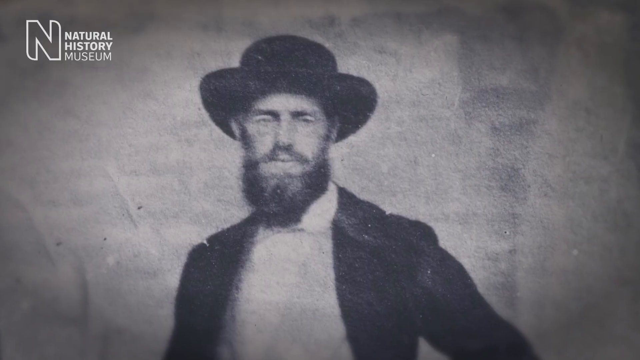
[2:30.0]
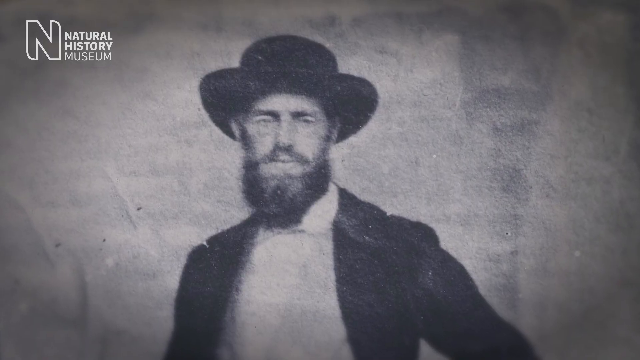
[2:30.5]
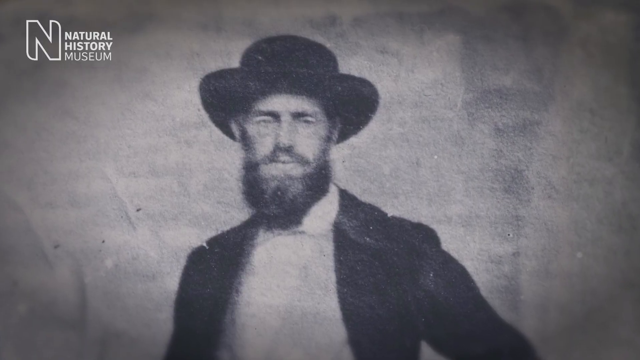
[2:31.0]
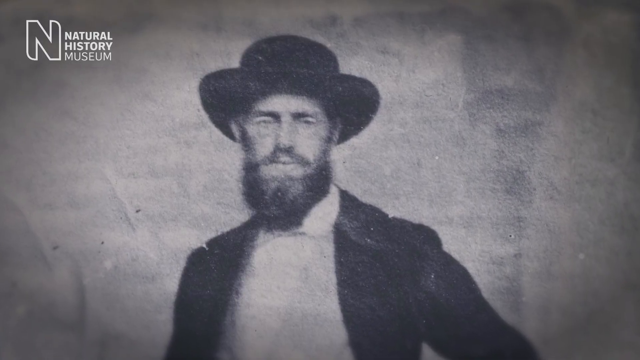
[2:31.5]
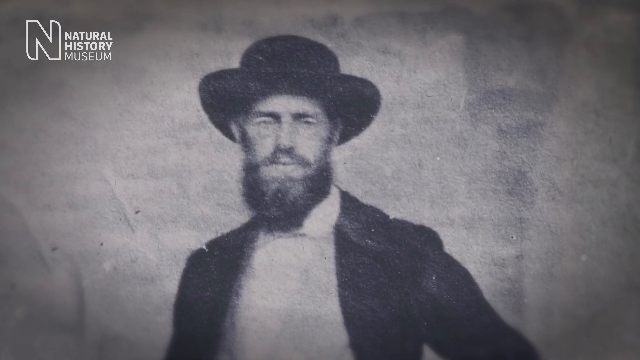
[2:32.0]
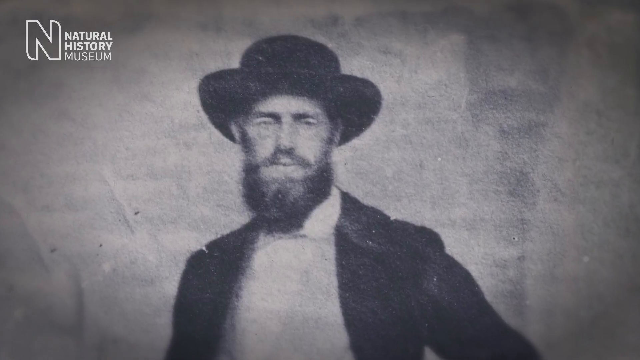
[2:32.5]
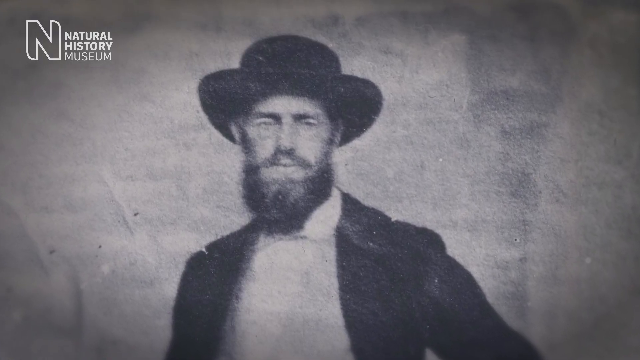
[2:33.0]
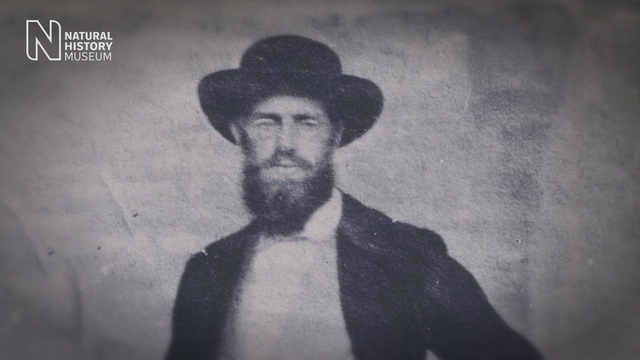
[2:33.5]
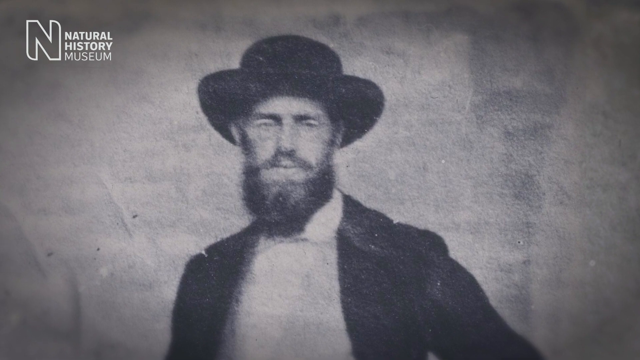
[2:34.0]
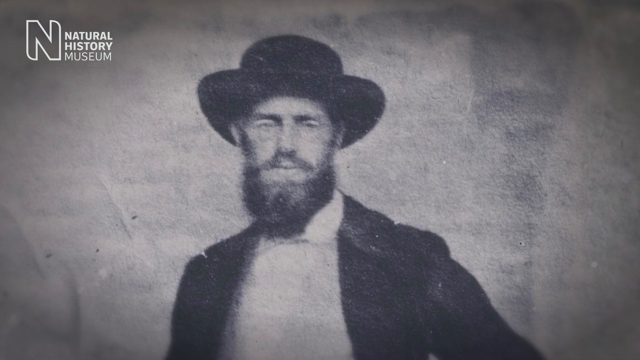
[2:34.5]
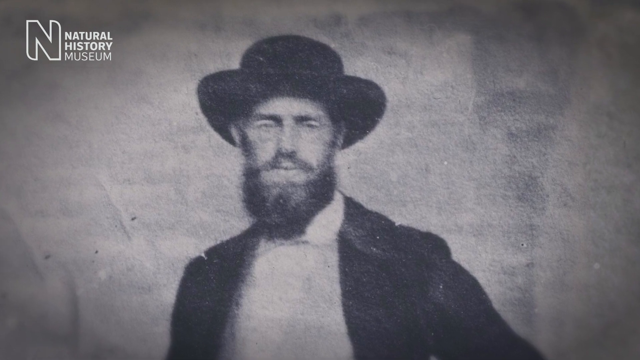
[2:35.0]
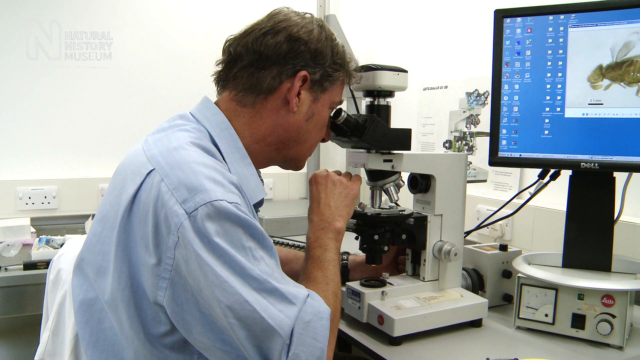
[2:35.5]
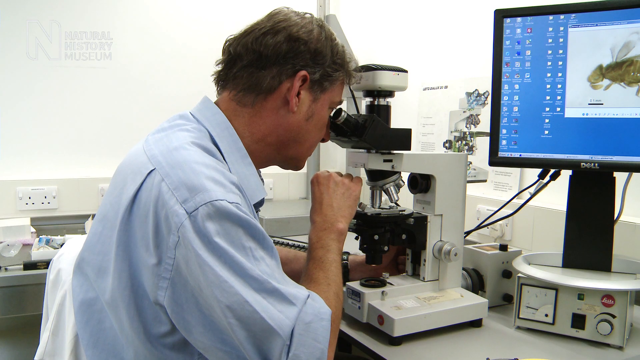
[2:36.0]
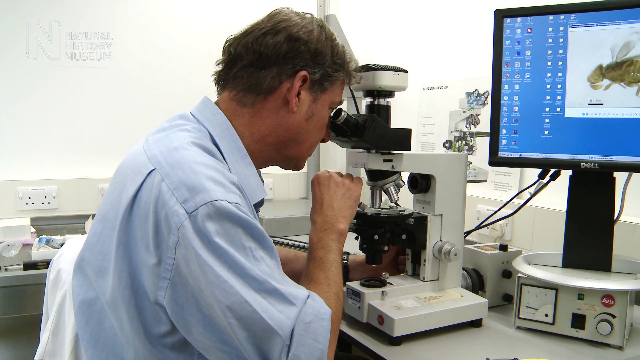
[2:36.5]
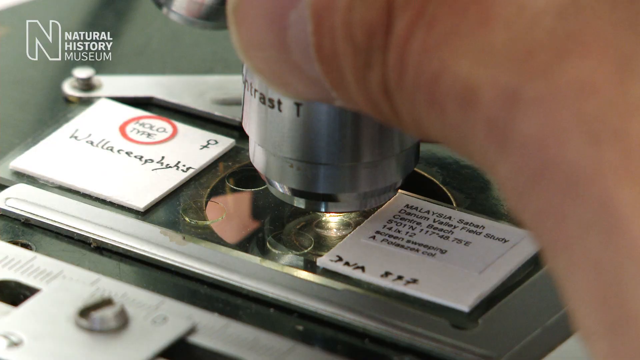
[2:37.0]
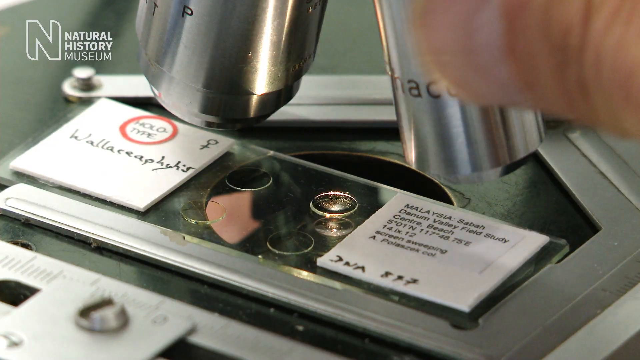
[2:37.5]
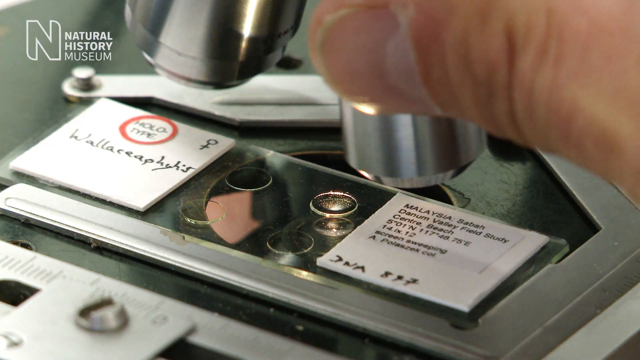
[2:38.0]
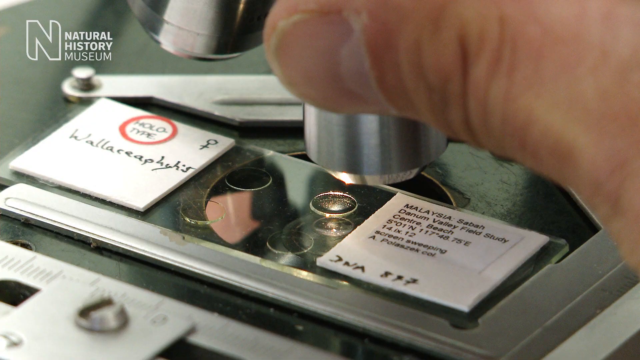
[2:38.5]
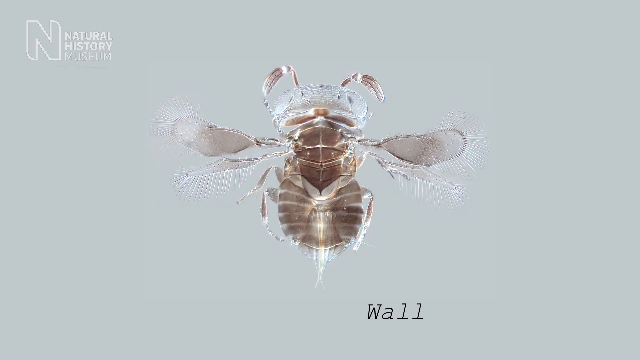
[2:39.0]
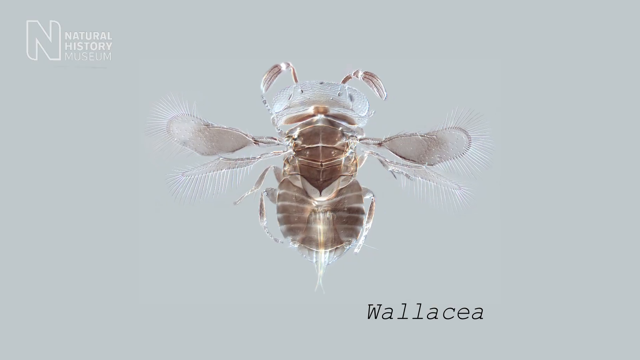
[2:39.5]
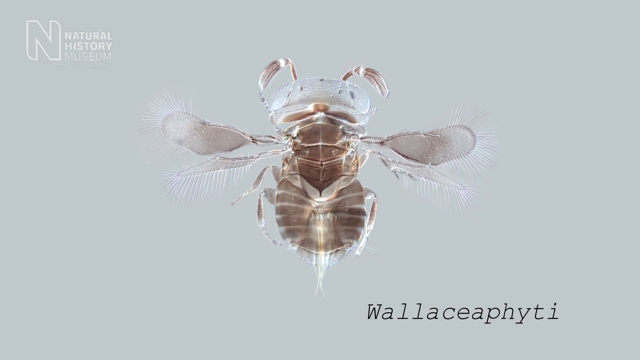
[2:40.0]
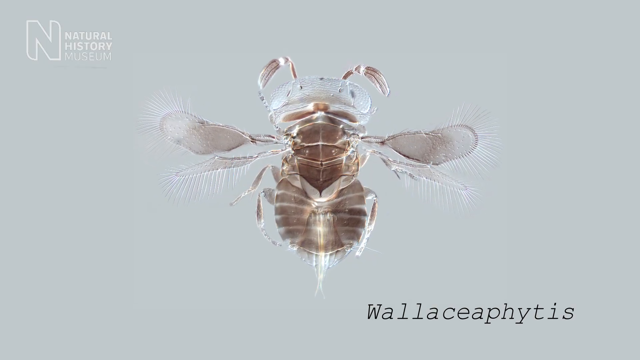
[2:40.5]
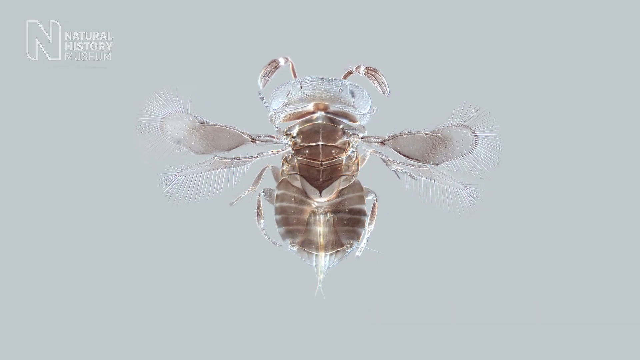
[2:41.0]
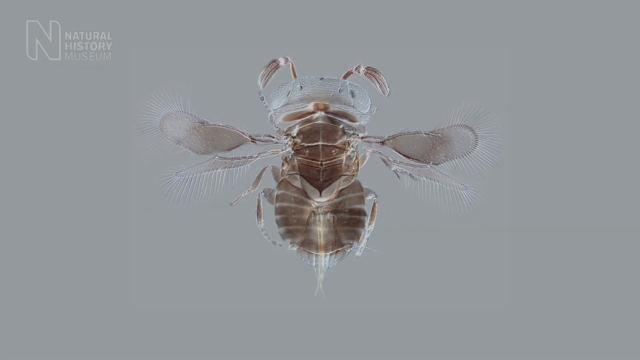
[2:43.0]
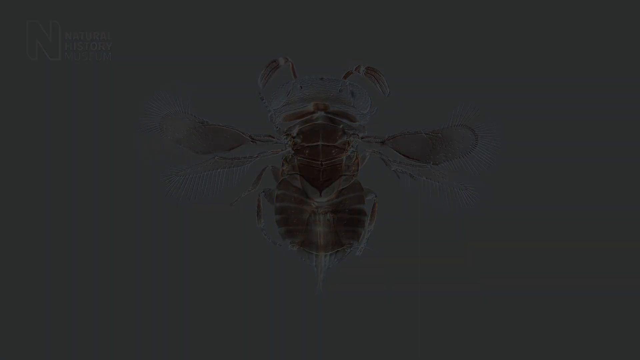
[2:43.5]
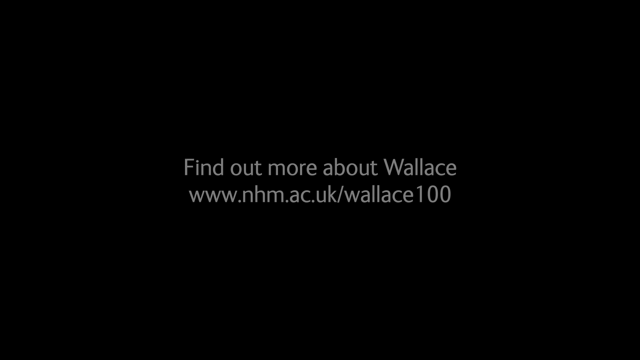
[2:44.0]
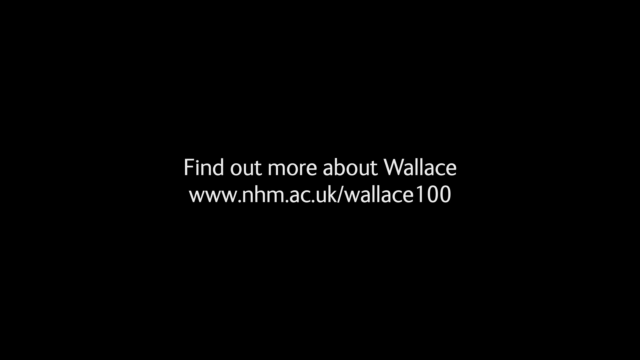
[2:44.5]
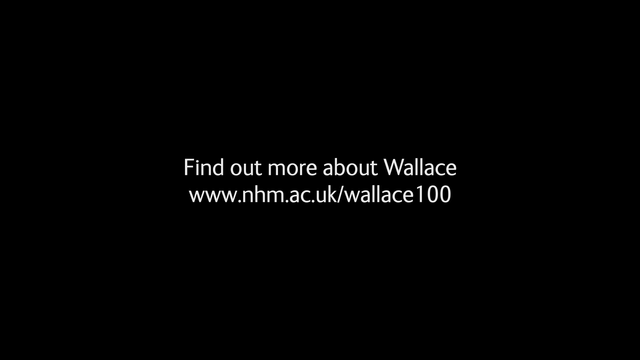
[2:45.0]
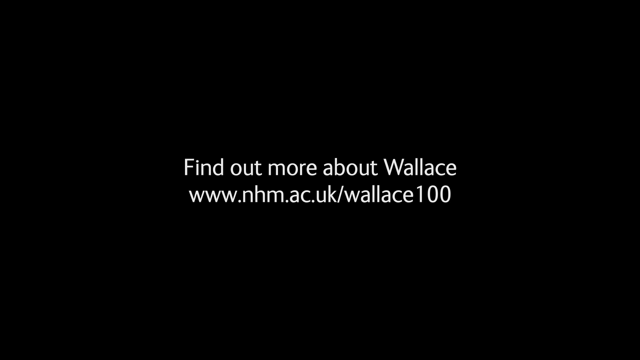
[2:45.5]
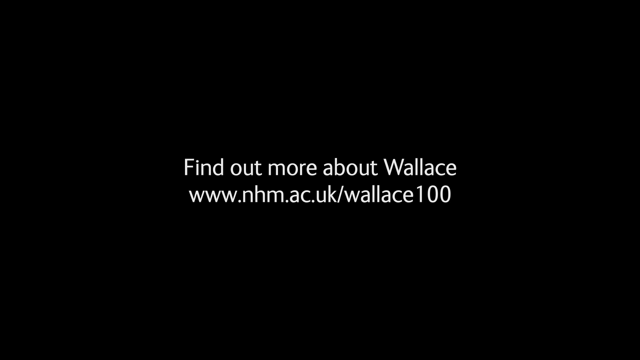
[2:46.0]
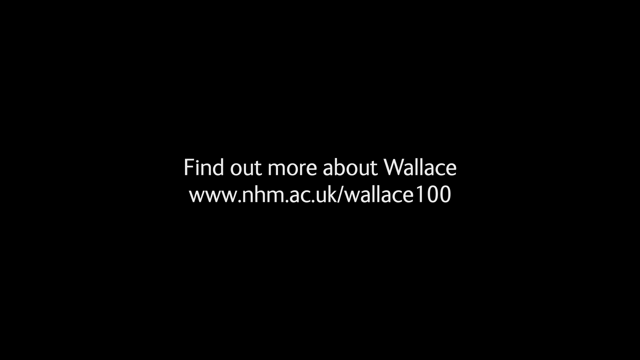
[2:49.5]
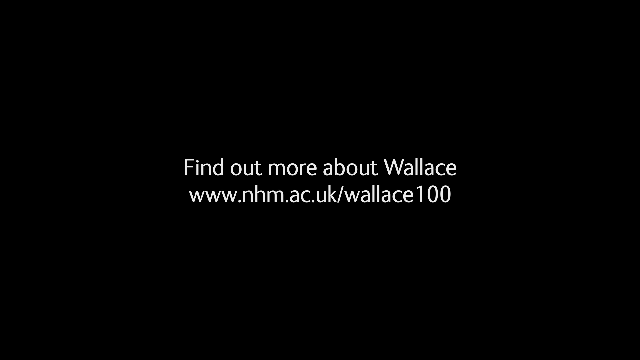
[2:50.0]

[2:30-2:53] The picture of the gentleman in the black hat stays still while the camera gradually moves in towards him. The video returns to Dr. Prochaska looking very intently through the microscope with his right hand lifted. A screen linked to the microscope shows the whole wasp. He lifts his head slightly, and the view moves down to his fingers on the right-hand side moving the different objectives around in a clockwise direction. A microscope slide next to it reads something about "Wallacephorus", possibly the name given to the insect; other information on the right-hand side is in letters too small to read. The video then shows the insect again, gradually zooming in, showing the whole insect with translucent wings, its striped abdomen and its antenna; its legs seem much smaller. Text then reads "find out more about Wallace, www.nhm.ac.uk/Wallace100". Dr. Kruszewski is seen moving his hand slightly, and the slide writing is not readable enough to tell what it says. The video returns to the wasp, zooming in, and different hairs are visible coming down from its wings.